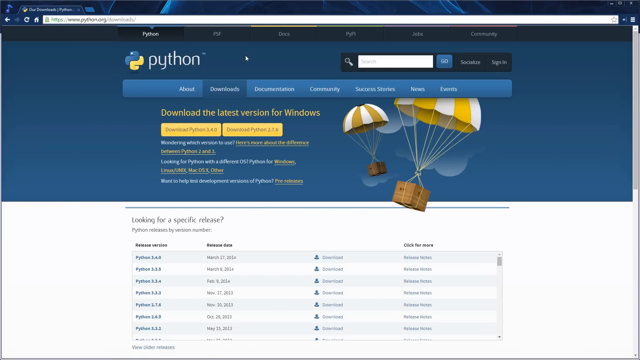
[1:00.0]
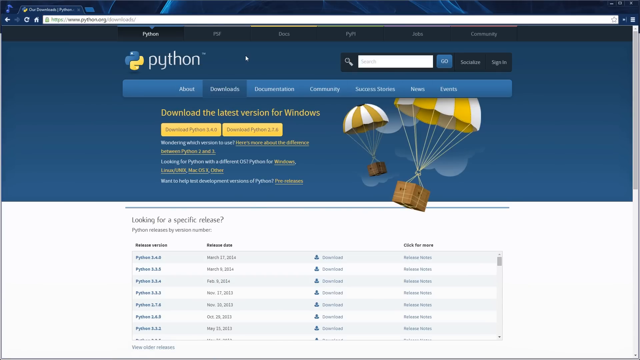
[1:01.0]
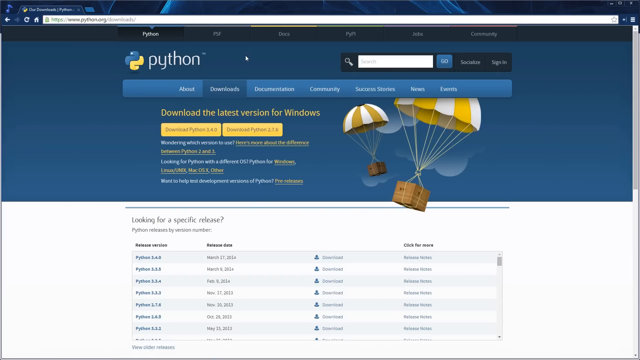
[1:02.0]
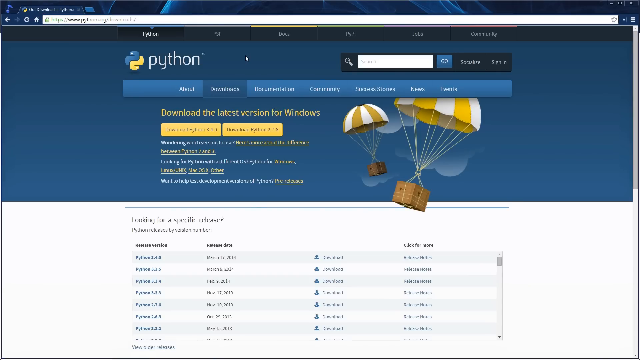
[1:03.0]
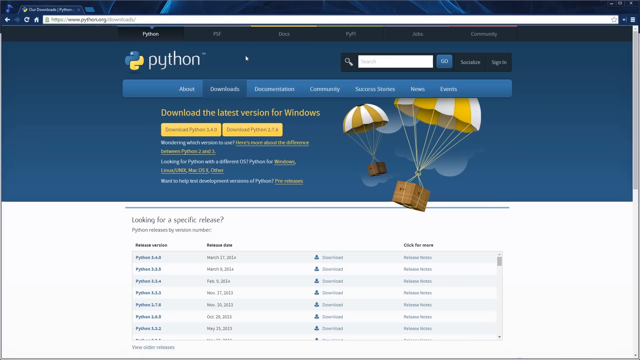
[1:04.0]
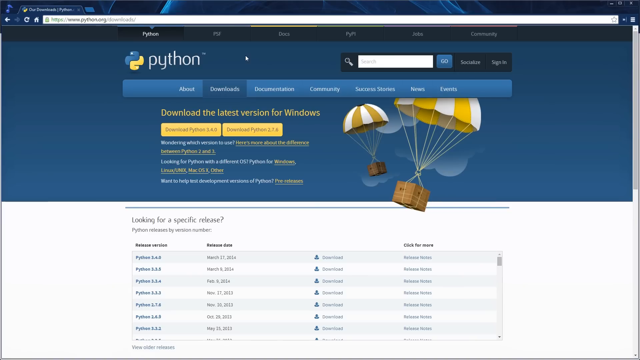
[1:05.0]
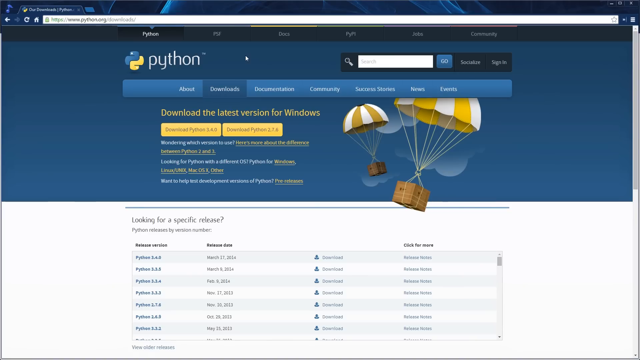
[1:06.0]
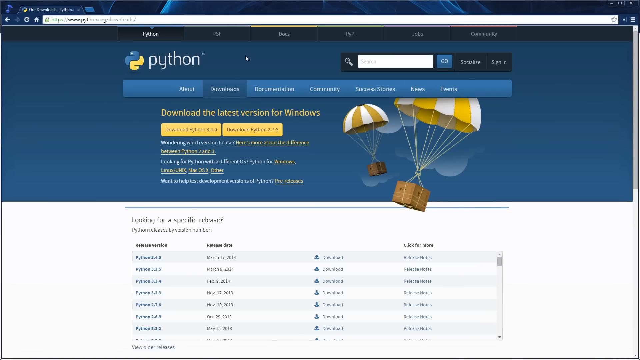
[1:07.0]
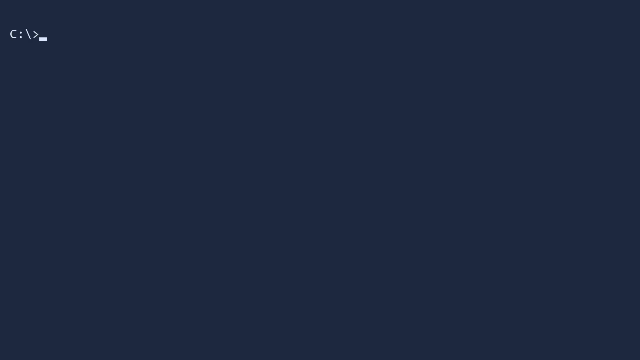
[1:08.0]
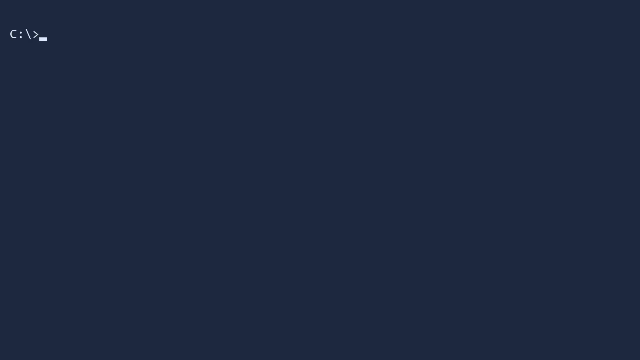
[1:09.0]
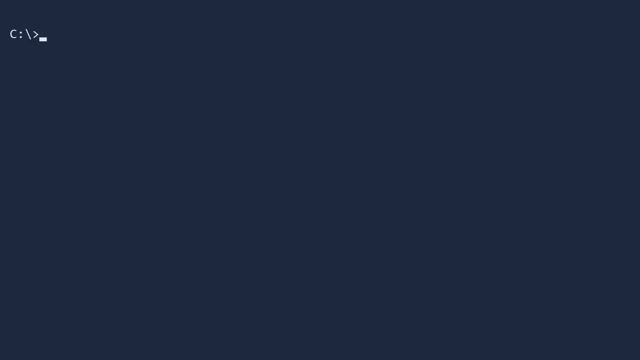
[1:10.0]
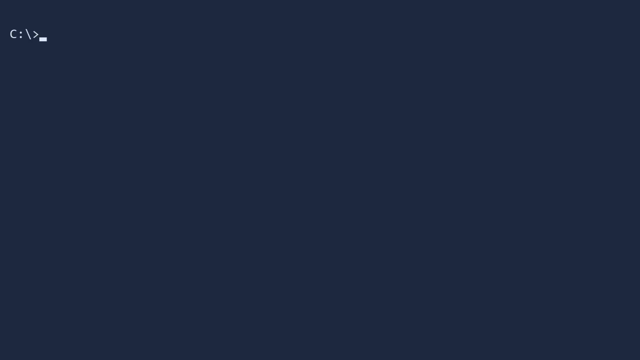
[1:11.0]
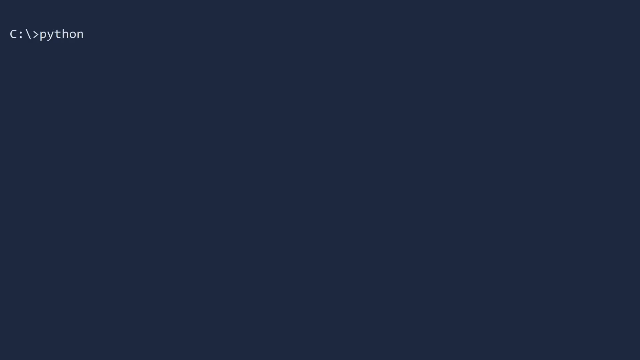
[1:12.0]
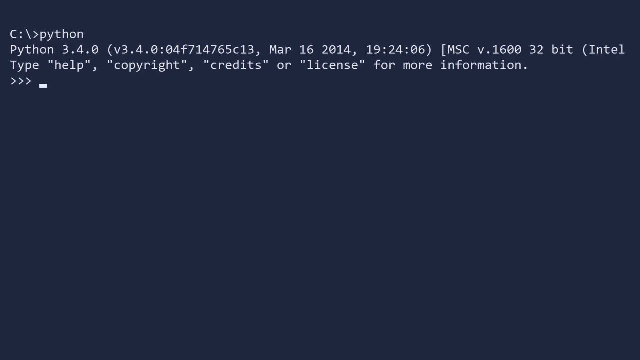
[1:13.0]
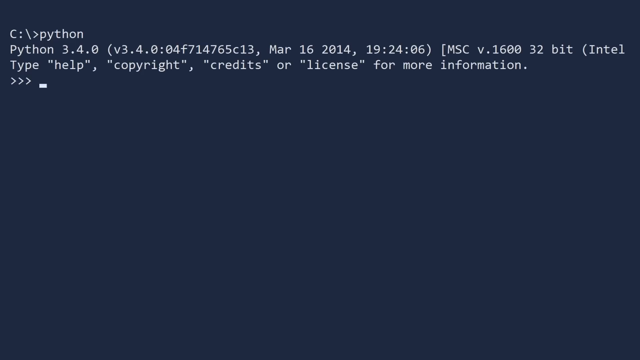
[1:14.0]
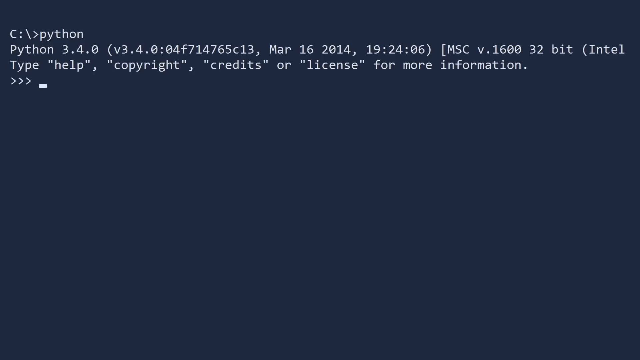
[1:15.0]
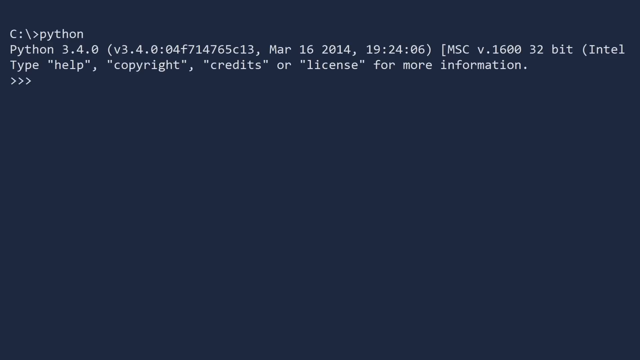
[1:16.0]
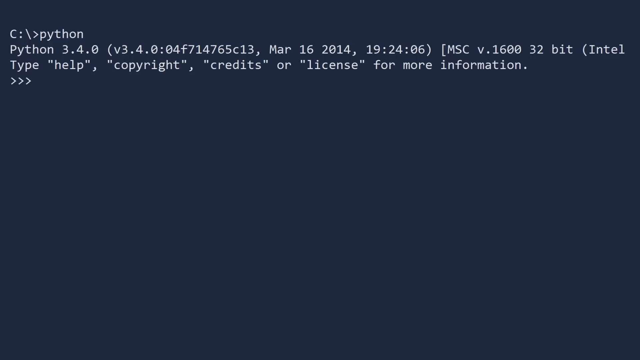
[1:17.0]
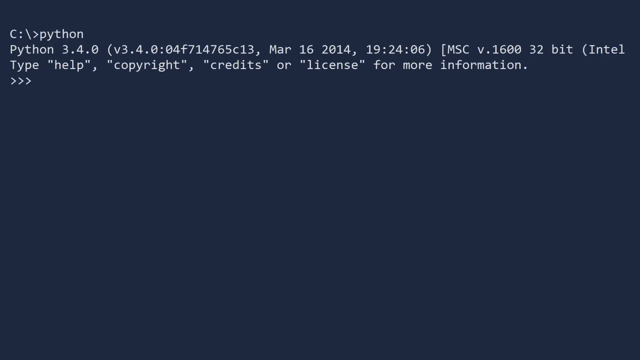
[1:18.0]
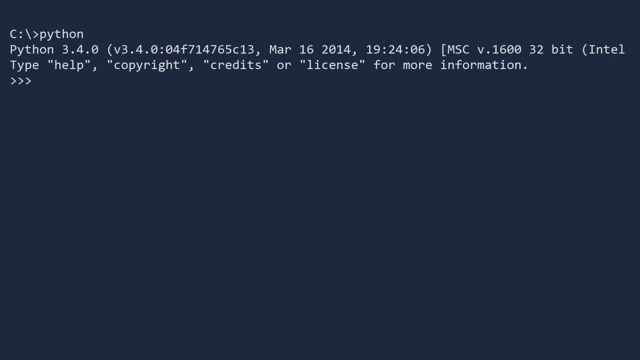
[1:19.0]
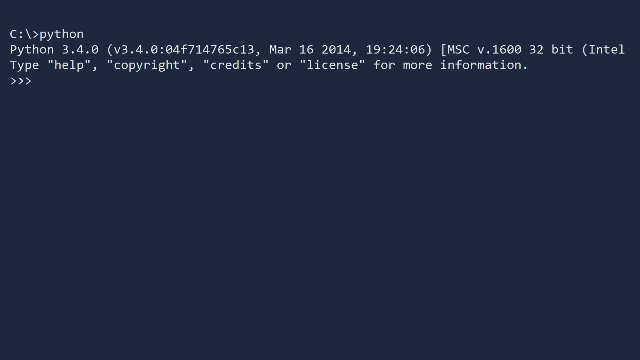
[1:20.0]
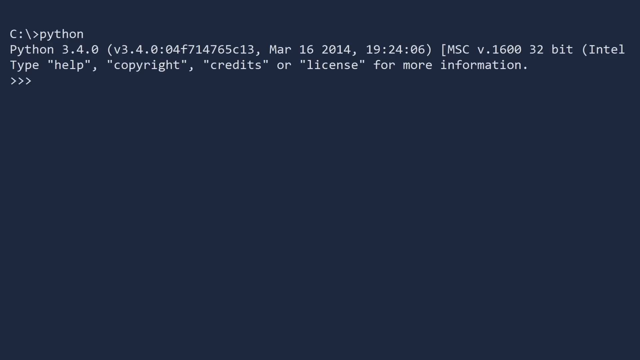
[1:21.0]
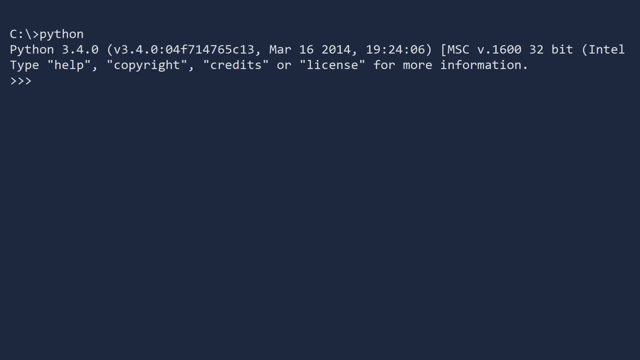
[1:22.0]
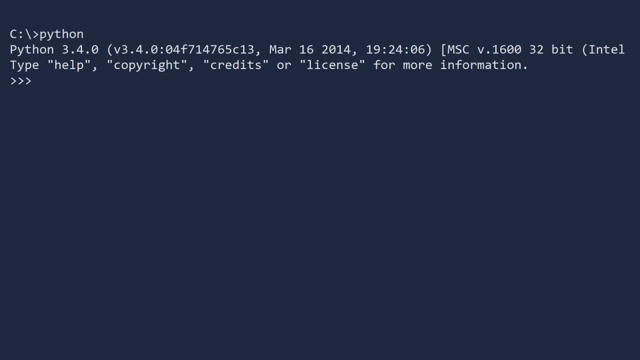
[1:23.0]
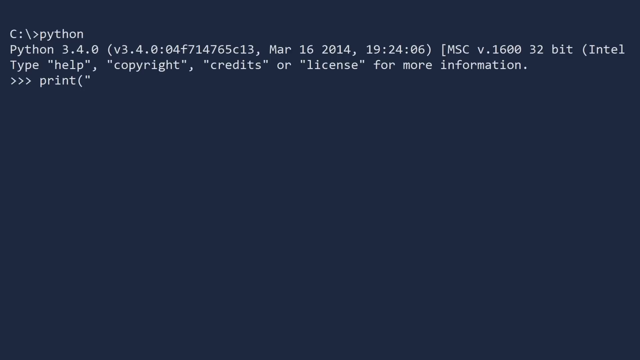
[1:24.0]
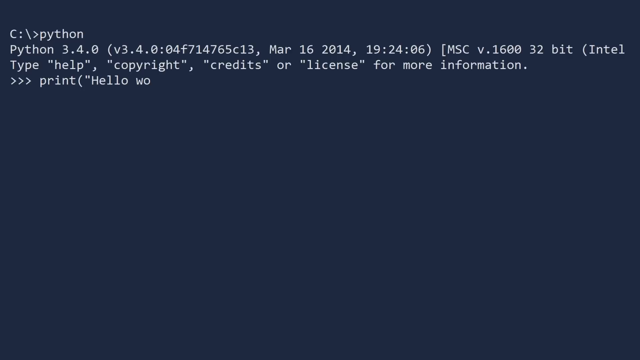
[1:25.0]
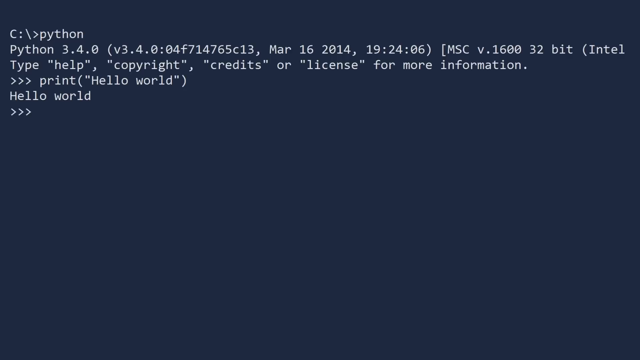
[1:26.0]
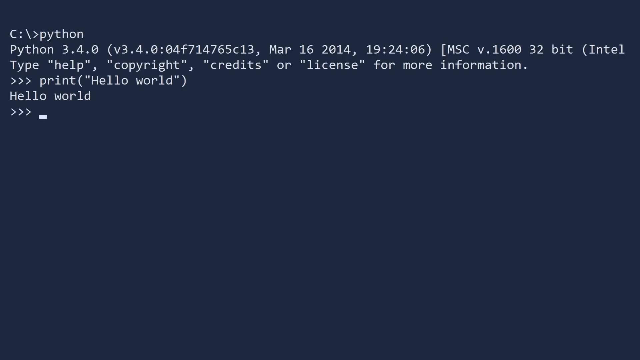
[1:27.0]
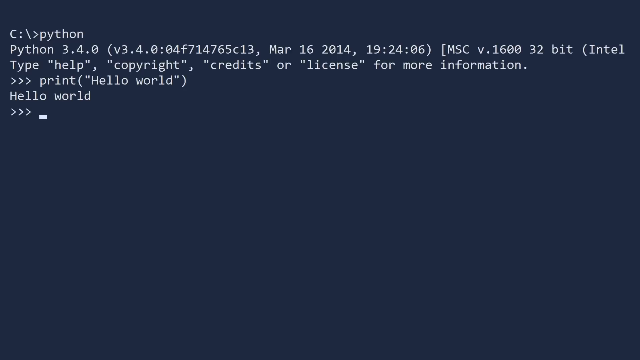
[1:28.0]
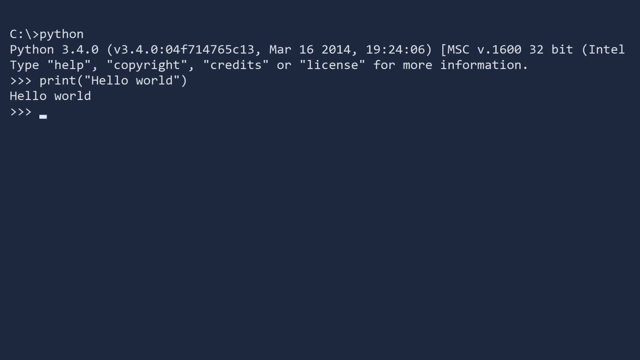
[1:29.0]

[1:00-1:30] The downloads page of the Python website is shown, divided into two parts. The top part has a blue background, with the site headers, yellow download buttons for the latest versions of Python, some more information to learn more, and some pictures. Below it is a white panel listing various versions of Python to download. The screen then transitions back to the command terminal with the dark blue background. The terminal is empty, and the user types "python". Text appears giving various information such as the Python version, with three forward arrows on the next line. The user then types Python code: print() with "hello world" in quotation marks, and on the line below, the terminal shows "hello world".